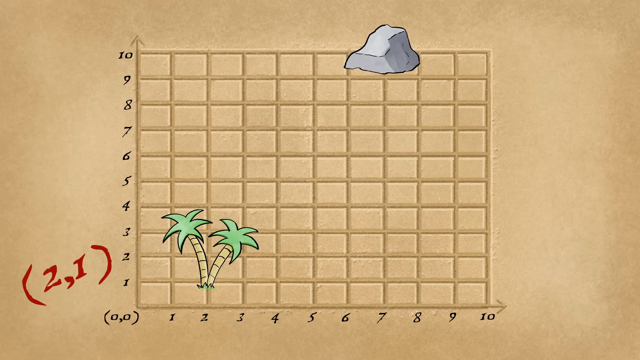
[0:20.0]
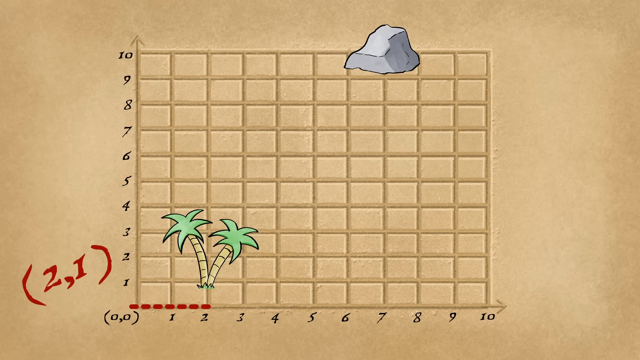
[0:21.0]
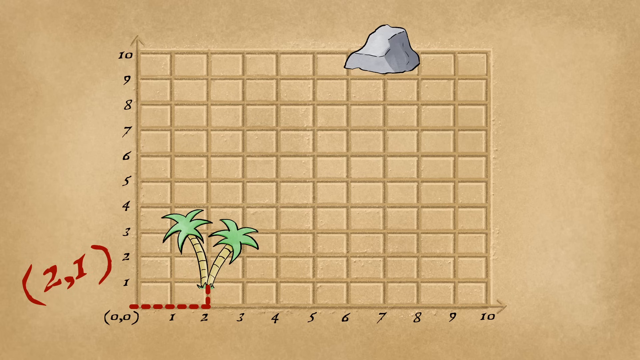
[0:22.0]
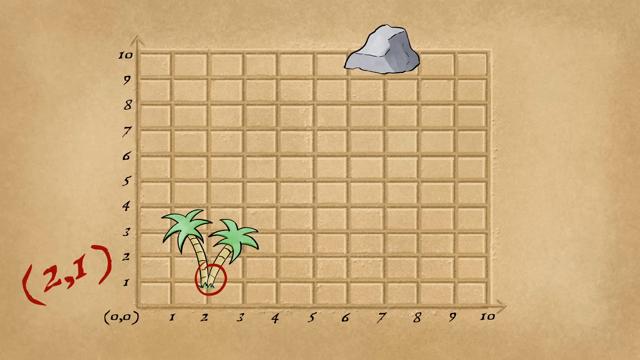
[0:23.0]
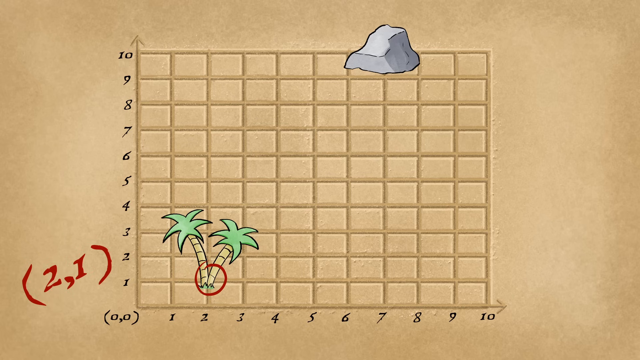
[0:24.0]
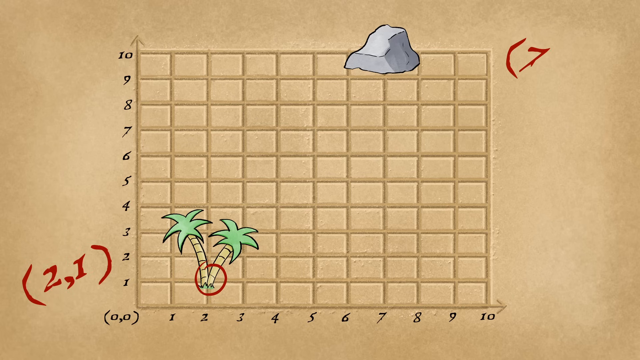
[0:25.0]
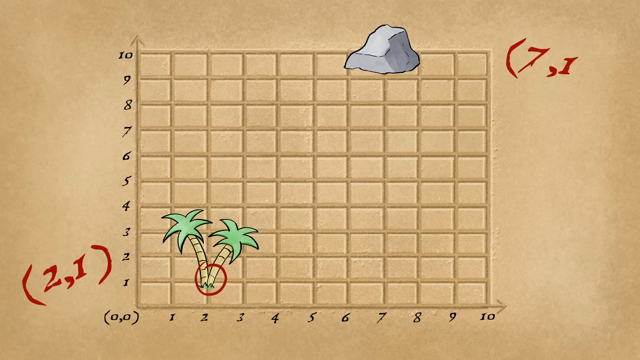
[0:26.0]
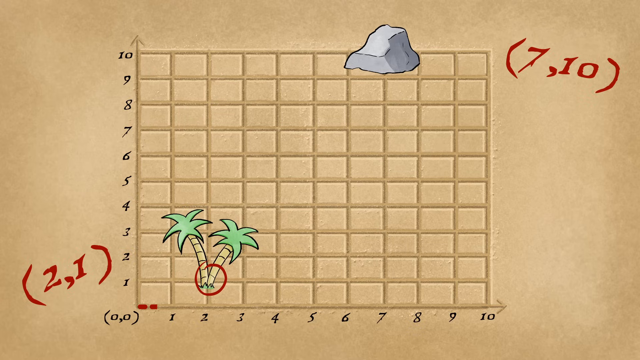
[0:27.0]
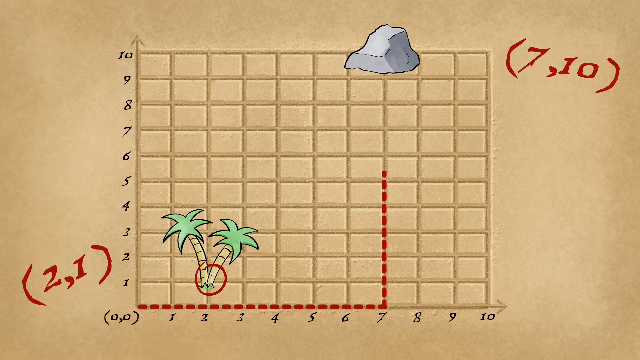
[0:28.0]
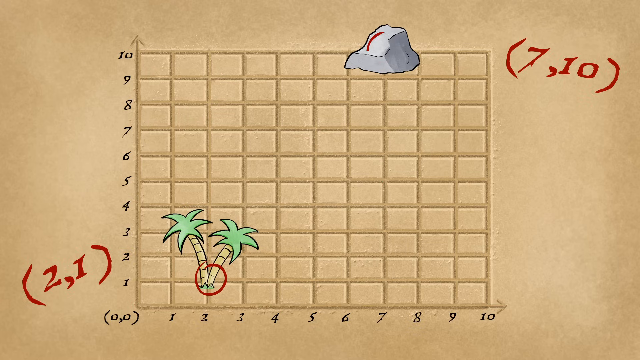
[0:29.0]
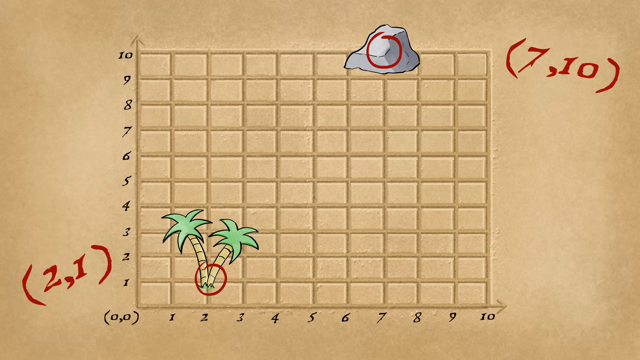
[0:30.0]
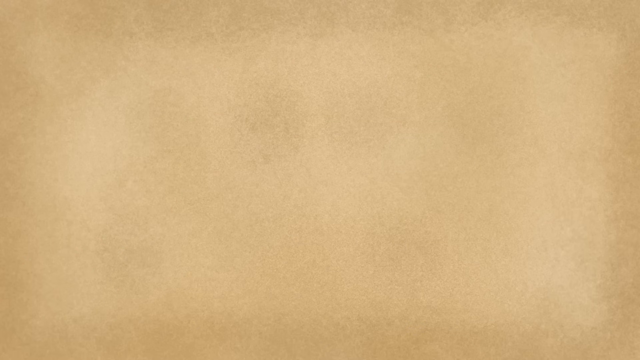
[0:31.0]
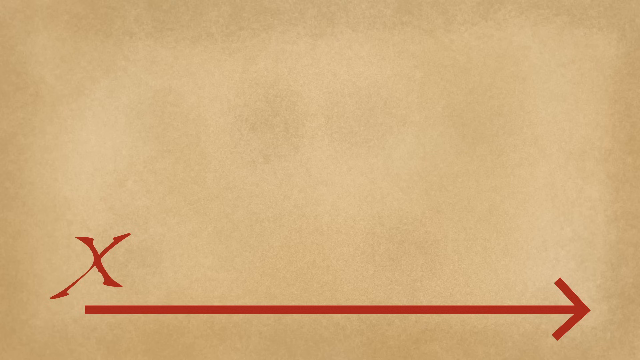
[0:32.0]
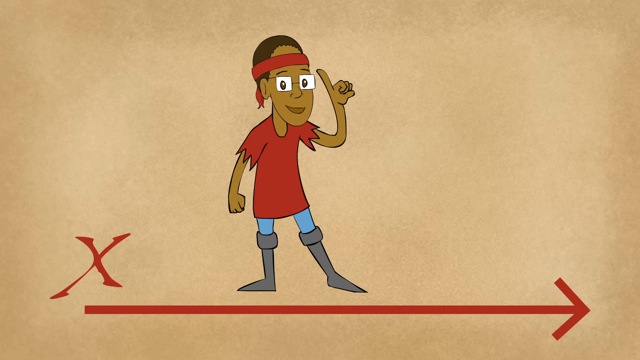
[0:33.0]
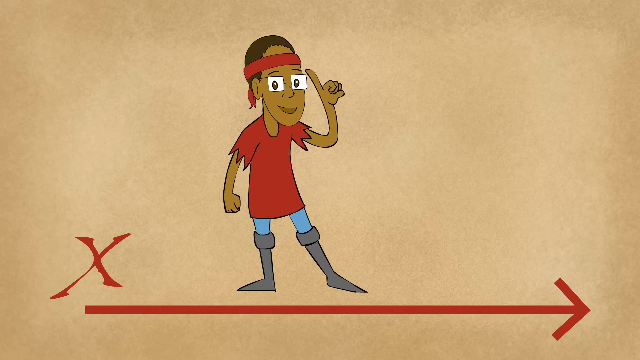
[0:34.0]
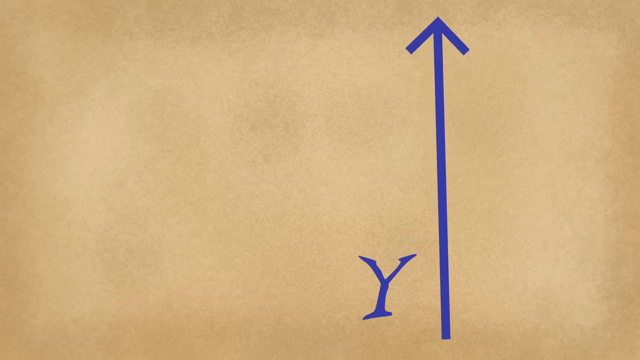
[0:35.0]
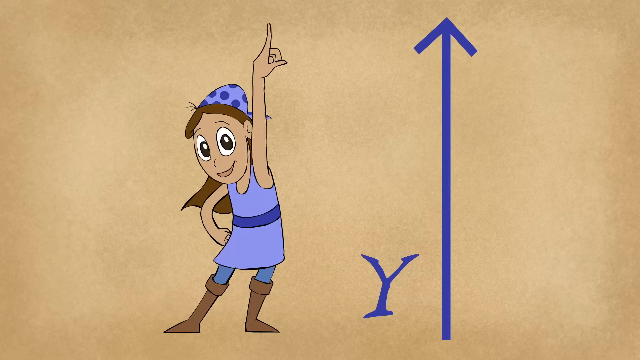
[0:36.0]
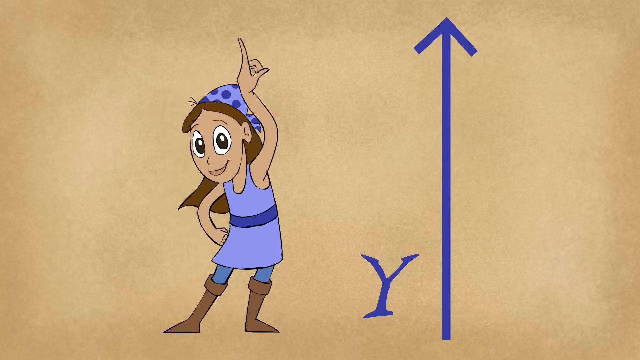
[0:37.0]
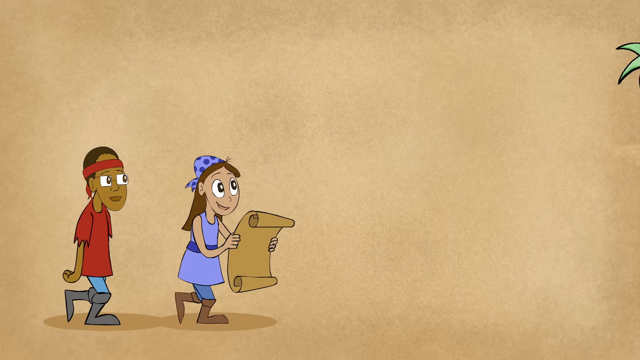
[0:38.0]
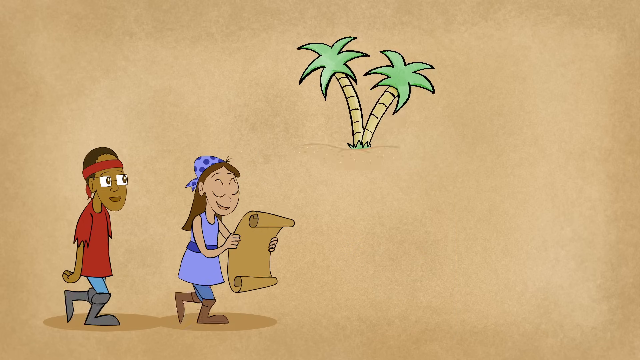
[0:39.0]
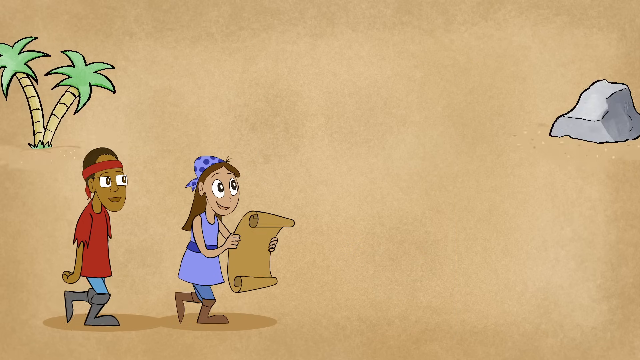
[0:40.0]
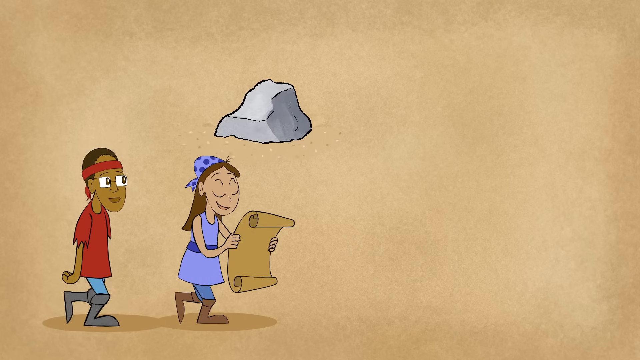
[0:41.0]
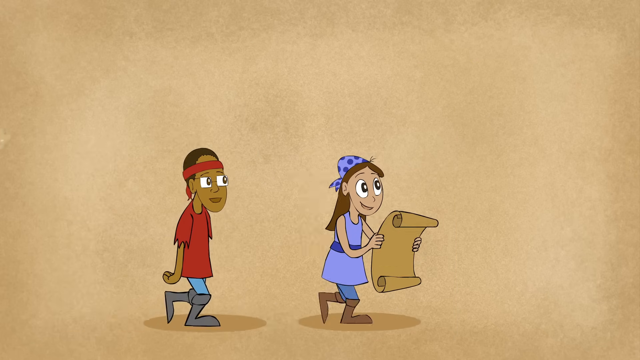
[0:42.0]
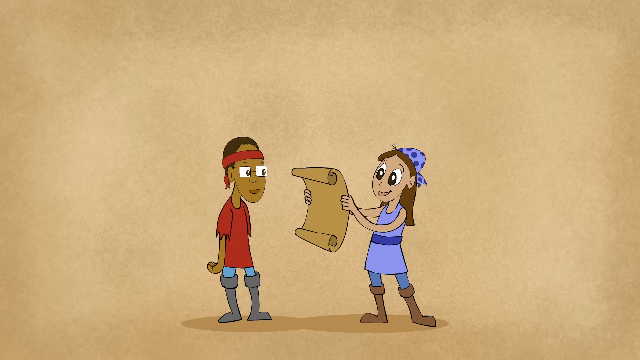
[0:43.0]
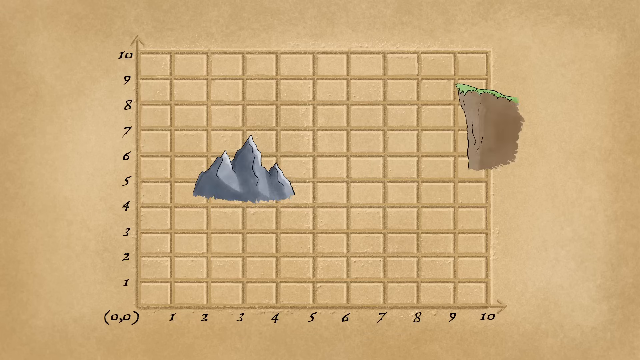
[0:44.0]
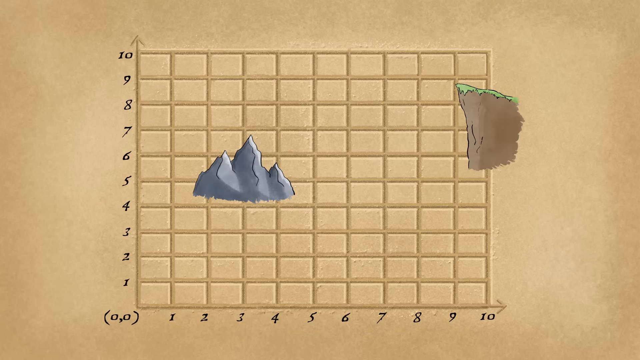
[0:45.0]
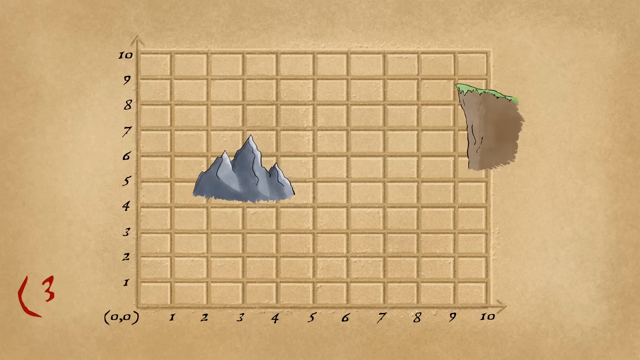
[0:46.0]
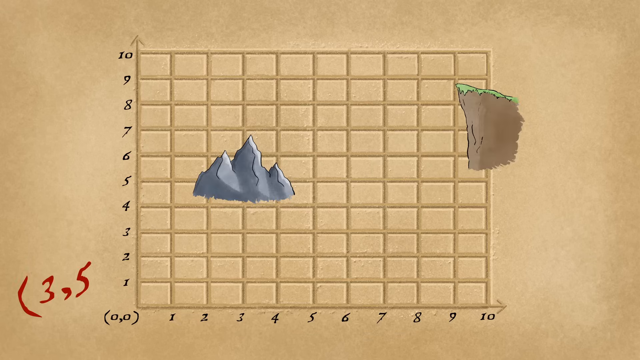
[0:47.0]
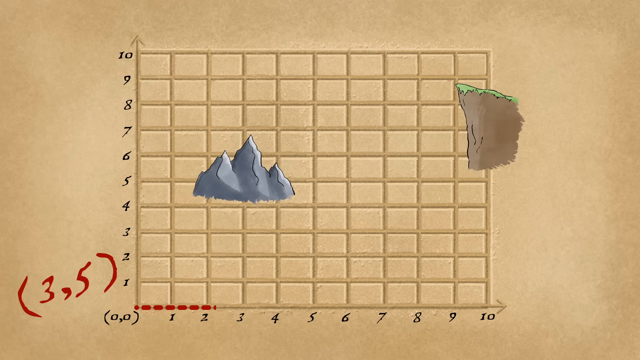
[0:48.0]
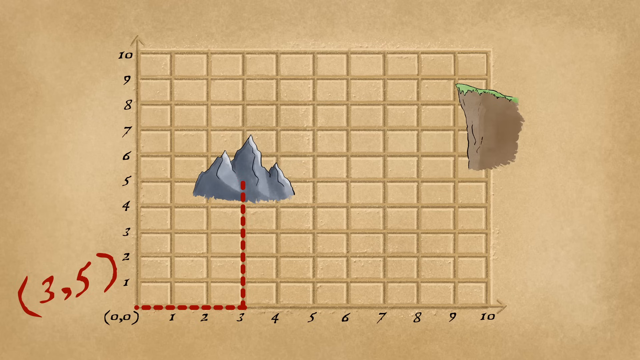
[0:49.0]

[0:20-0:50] "2, 1" is written on the screen. A box appears with a vertical line numbered 1 to 10 and a horizontal line numbered 1 to 10, with a rock and a tree in different parts of it. It appears to be a game in which the player has to find the best way to reach a destination. The first destination is 2, 1. Counting along, the rock is at 7, with the upper part at 10.